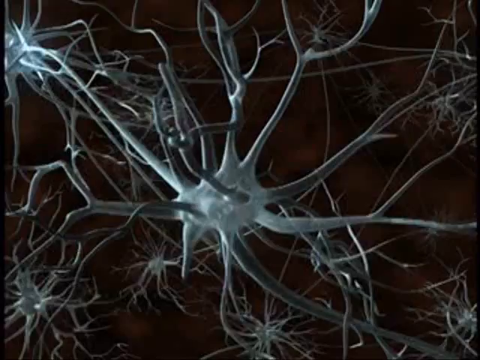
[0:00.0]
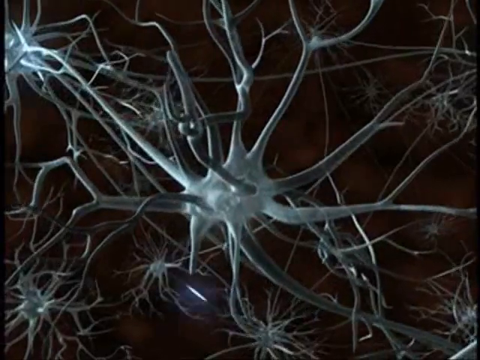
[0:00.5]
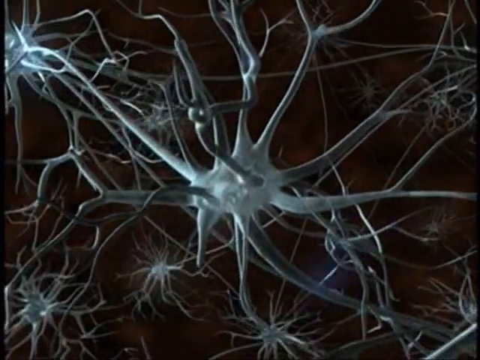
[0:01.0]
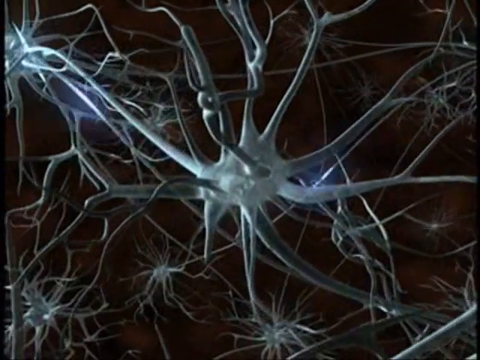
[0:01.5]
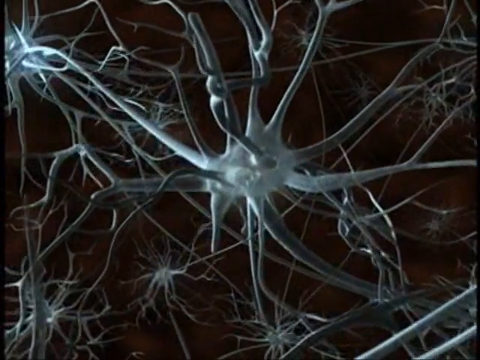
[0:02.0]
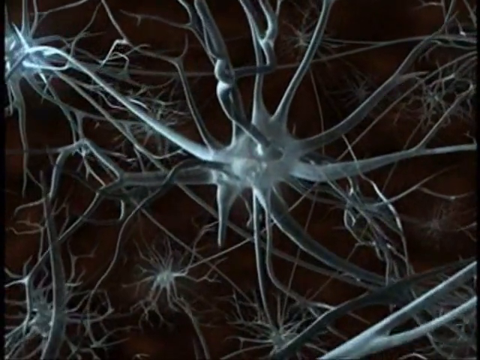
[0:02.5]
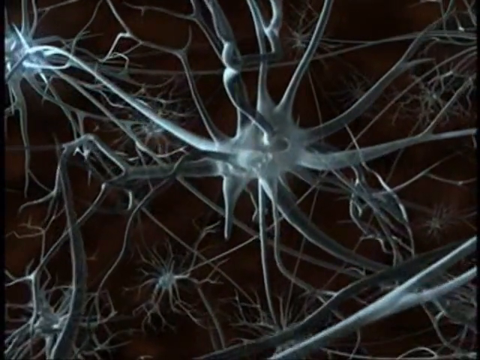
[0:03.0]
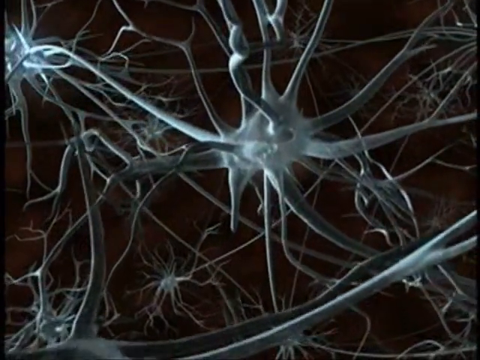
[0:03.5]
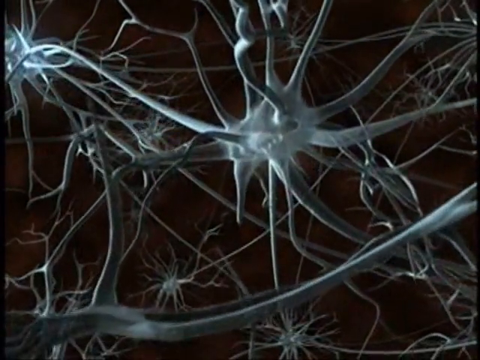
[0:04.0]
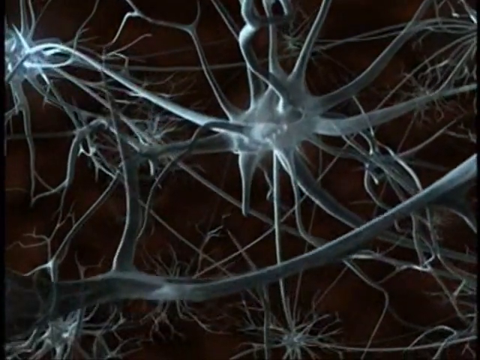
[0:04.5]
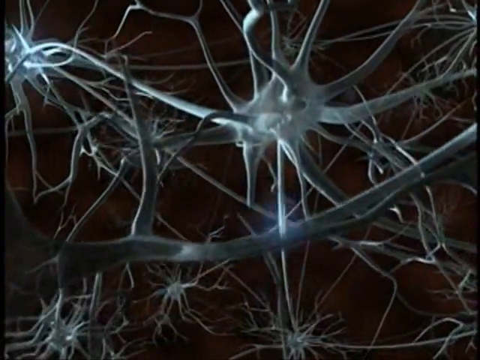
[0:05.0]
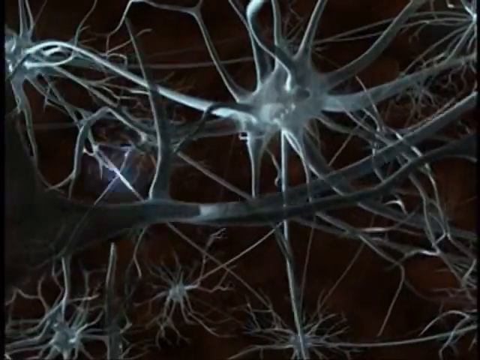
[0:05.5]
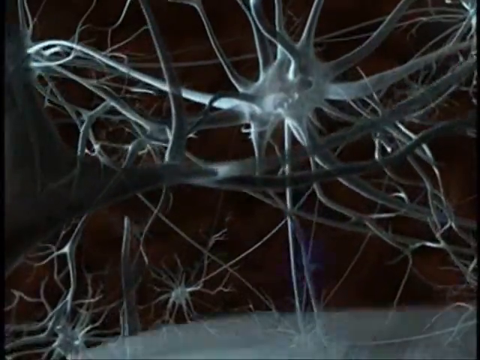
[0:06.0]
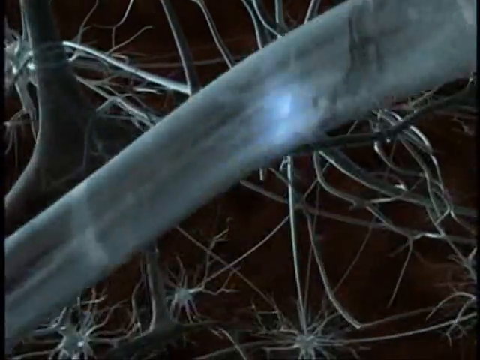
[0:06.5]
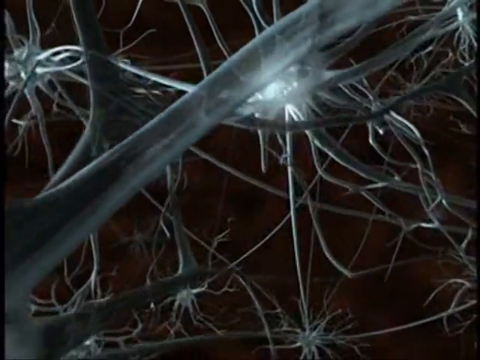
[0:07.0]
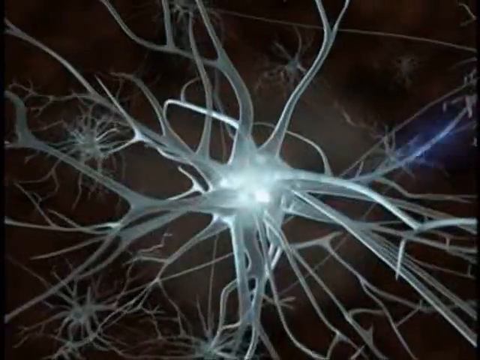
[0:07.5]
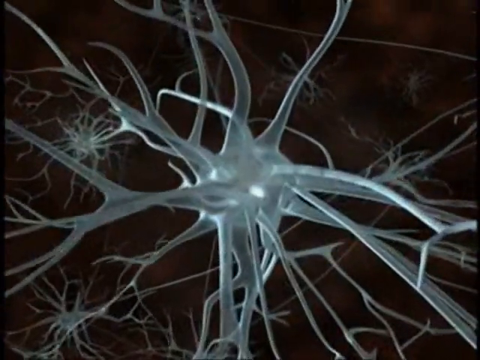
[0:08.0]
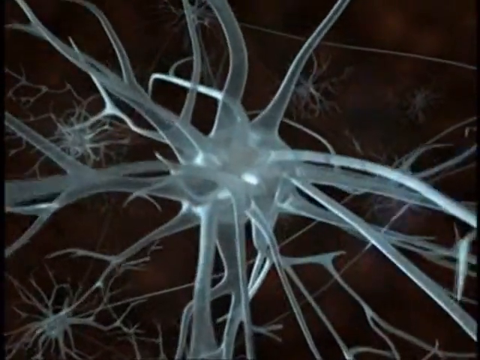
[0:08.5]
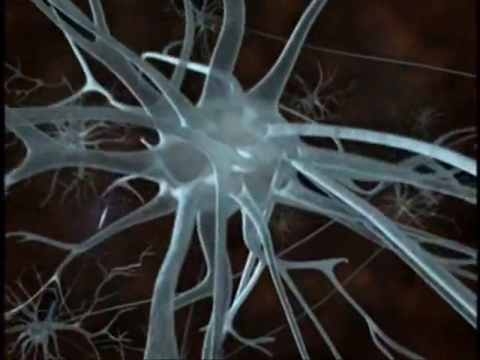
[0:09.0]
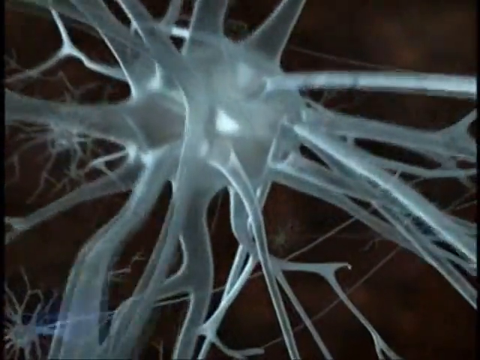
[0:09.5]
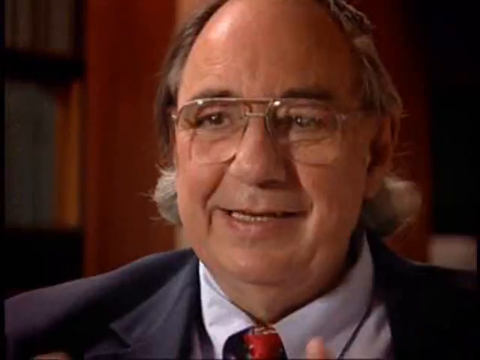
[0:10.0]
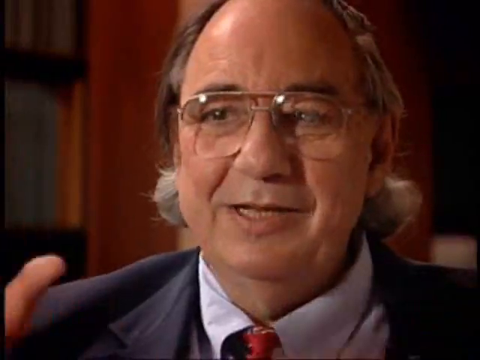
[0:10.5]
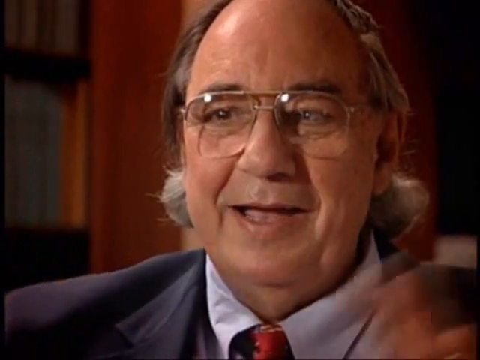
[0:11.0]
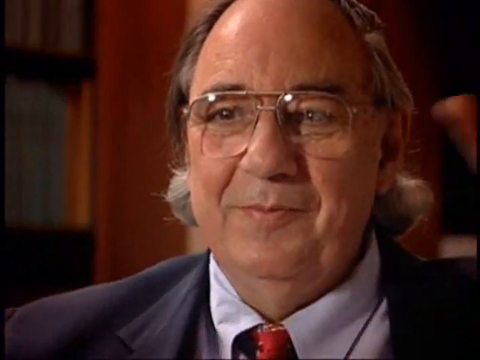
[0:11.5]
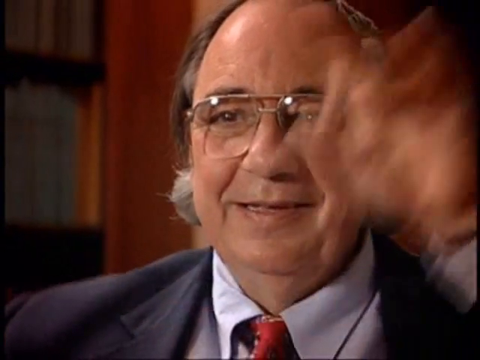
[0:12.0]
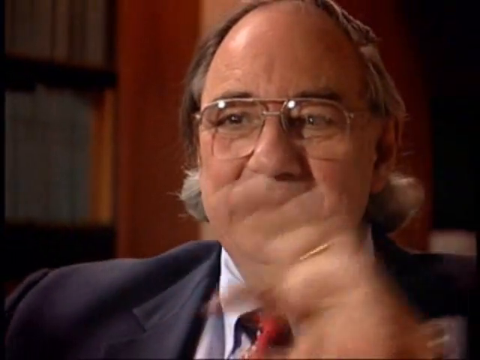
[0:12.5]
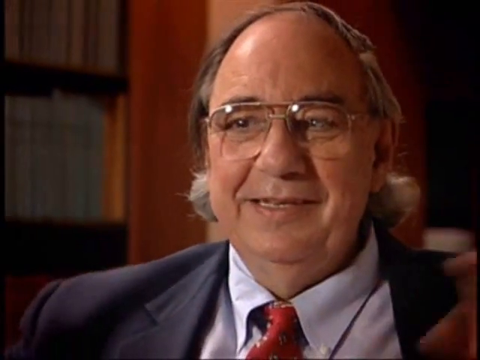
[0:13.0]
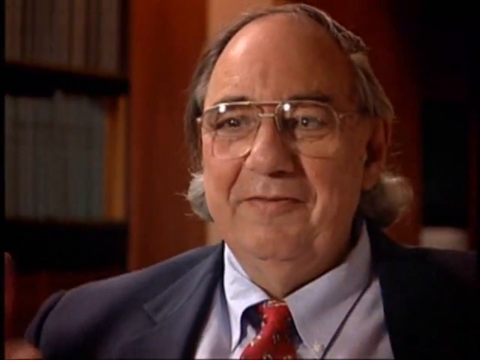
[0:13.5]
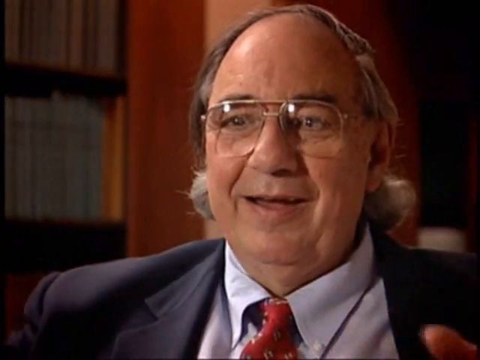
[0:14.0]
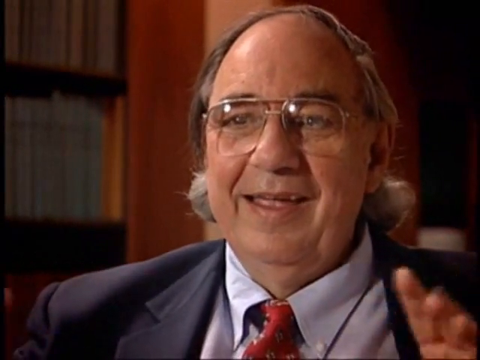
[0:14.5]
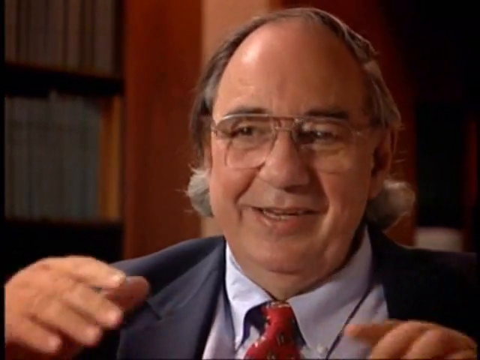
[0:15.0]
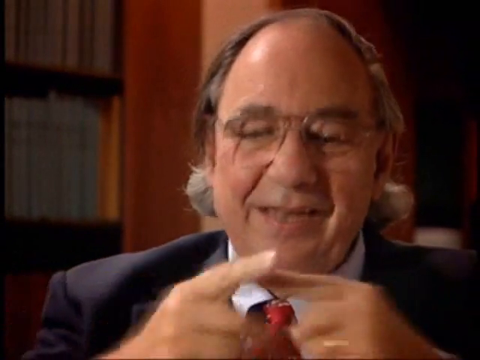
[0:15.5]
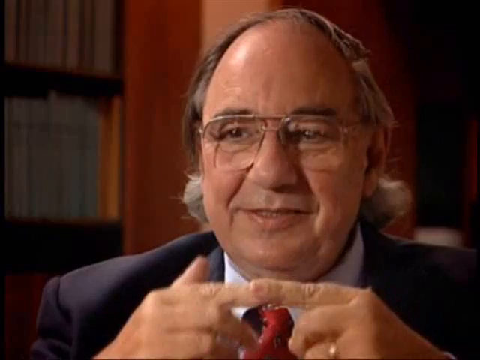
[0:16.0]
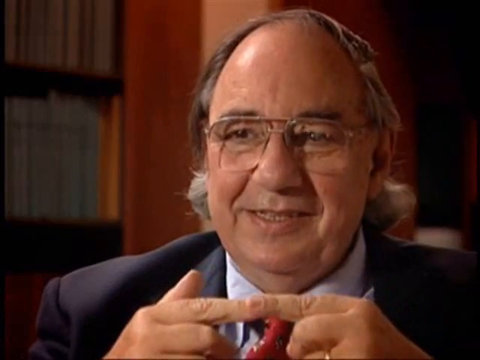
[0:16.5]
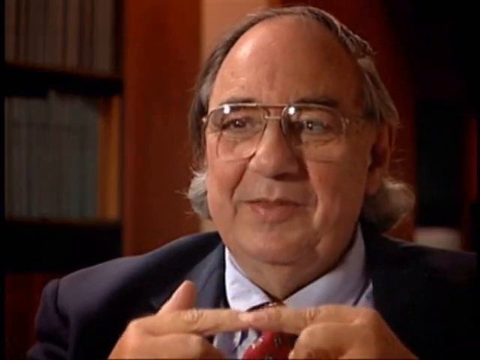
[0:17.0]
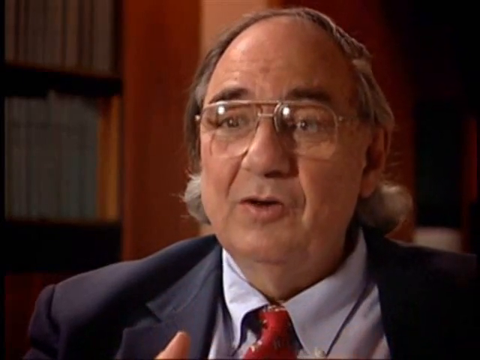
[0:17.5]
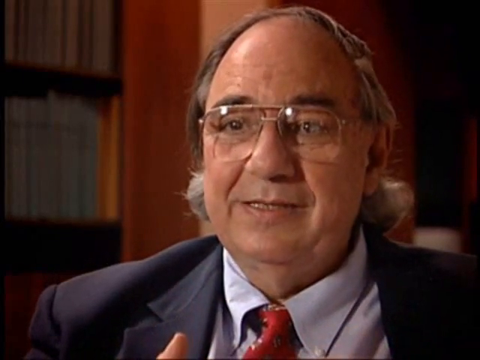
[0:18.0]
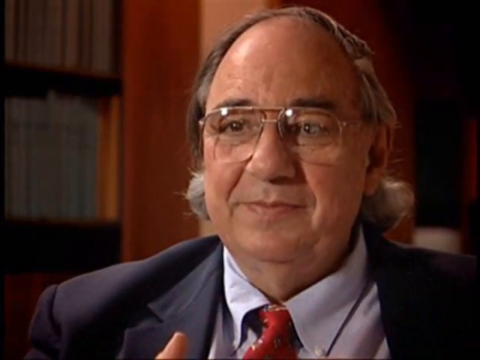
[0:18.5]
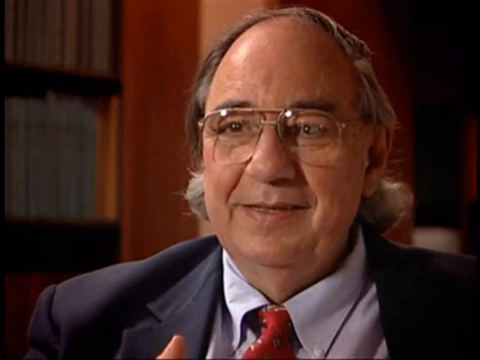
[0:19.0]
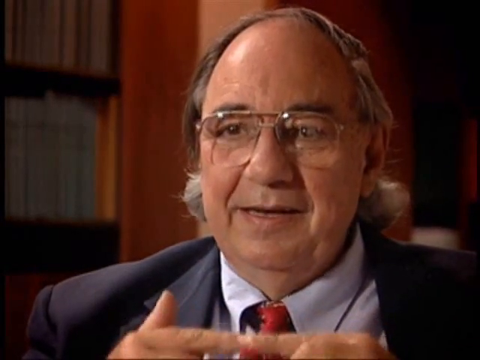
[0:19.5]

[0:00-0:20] The video opens with an artist's interpretation of what a microscopic neural network looks like. A large white structure is in the front with many branches coming off of it, in white and shades of gray. Behind it, more structures similar in size and nature recede into the background, all with many tendrils coming off them. Sparks of light shoot along some of these thin tendrils, apparently electrical impulses traveling the length of the structures. The camera pans closer to one for a close-up; it approaches the camera, spinning slightly as it comes, showing a large white center spot with bright lights inside it. The camera then switches to a man speaking to the camera. He looks slightly to the left and has a receding hairline, gray hair that is longer in the back, and squared-off, wire-rim aviator-style glasses. He smiles as he looks at the camera and gestures wildly with both hands as he speaks. He wears a gray suit jacket, a white shirt, and a red tie. At the end, he brings his two forefingers together and nods his head, emphasizing a point he is making.